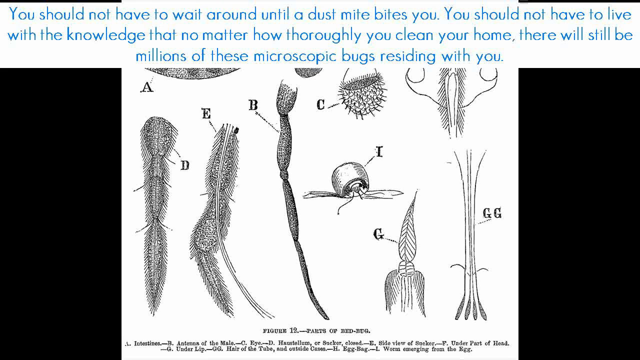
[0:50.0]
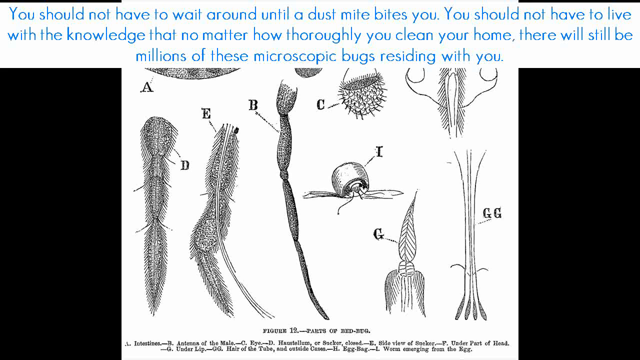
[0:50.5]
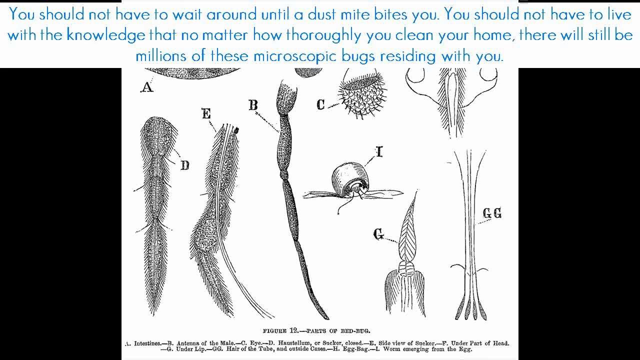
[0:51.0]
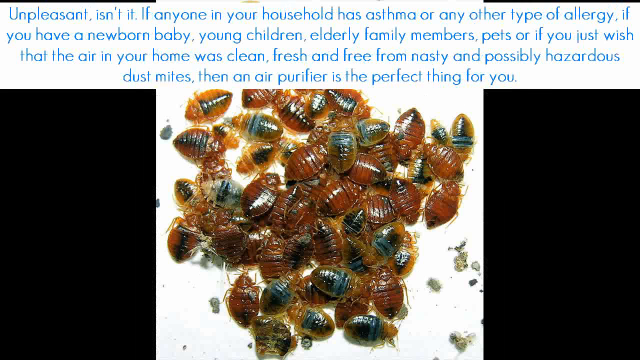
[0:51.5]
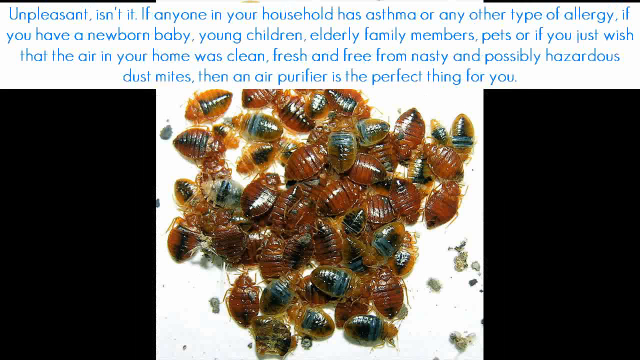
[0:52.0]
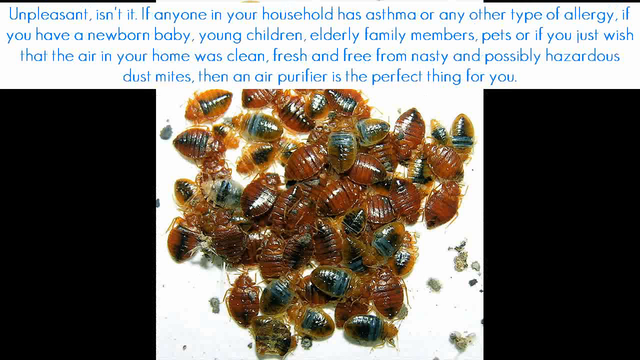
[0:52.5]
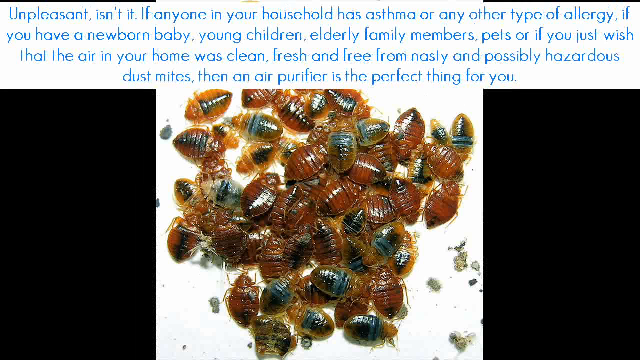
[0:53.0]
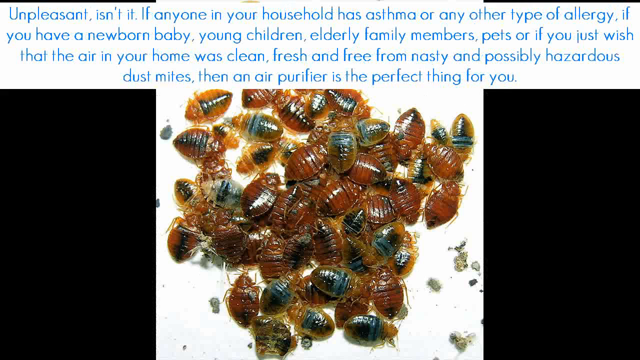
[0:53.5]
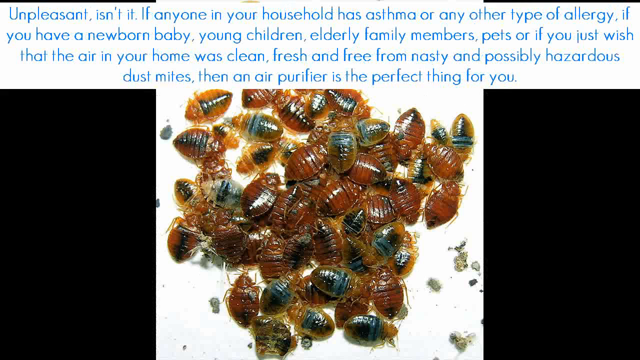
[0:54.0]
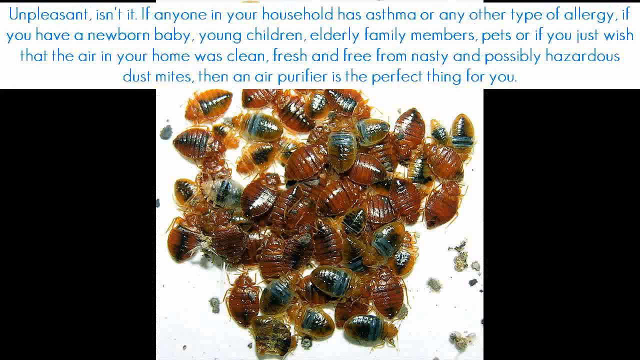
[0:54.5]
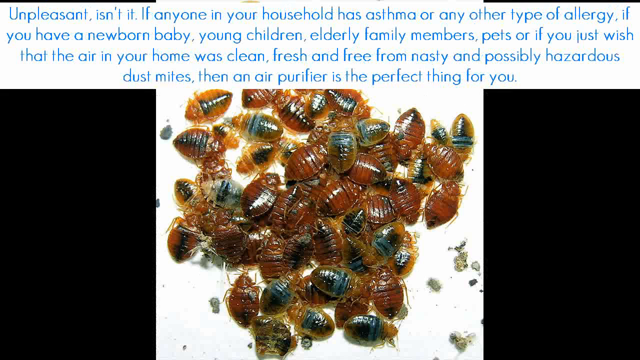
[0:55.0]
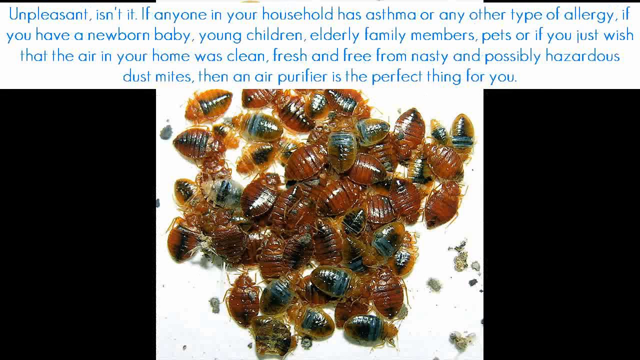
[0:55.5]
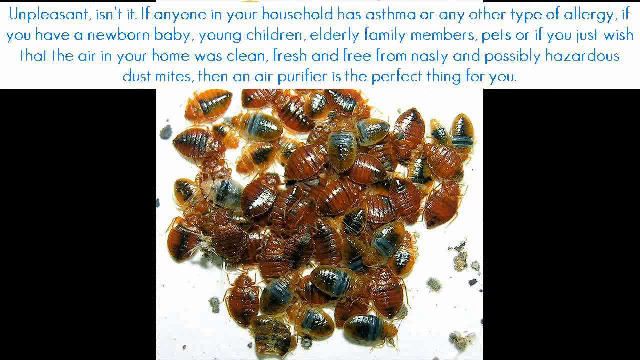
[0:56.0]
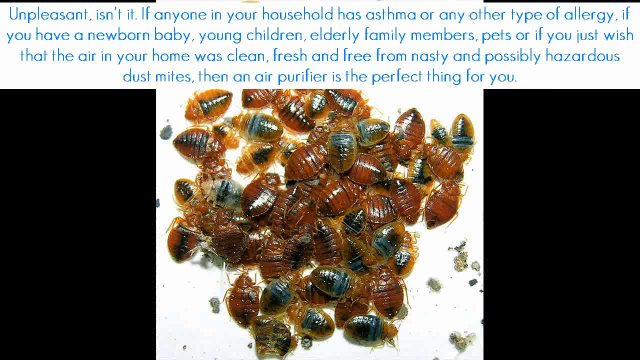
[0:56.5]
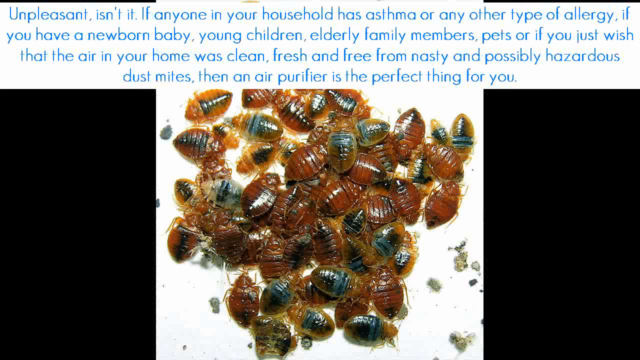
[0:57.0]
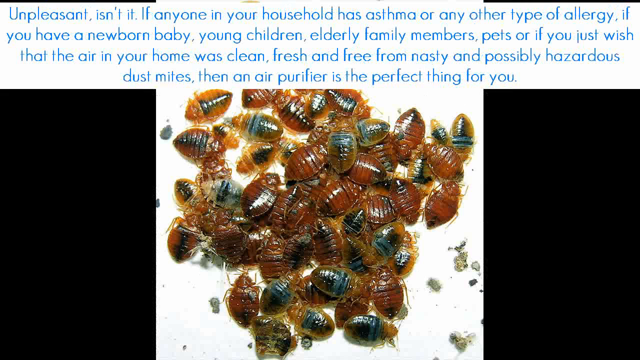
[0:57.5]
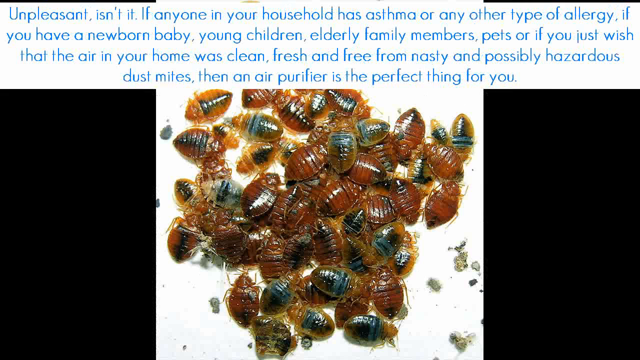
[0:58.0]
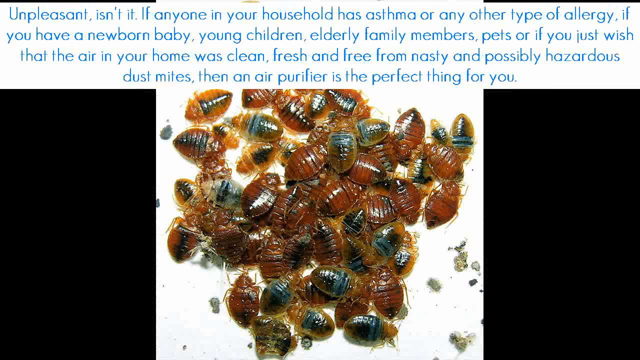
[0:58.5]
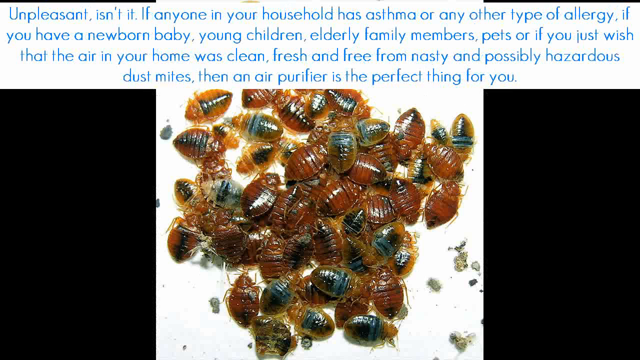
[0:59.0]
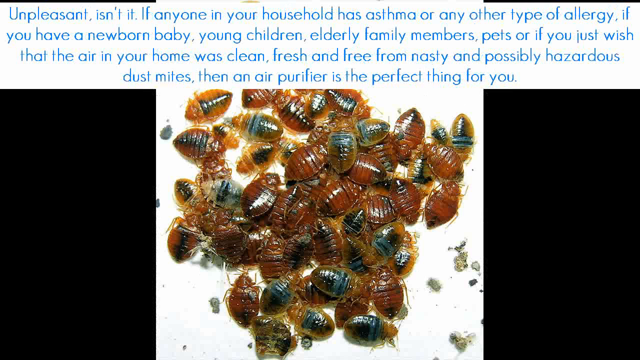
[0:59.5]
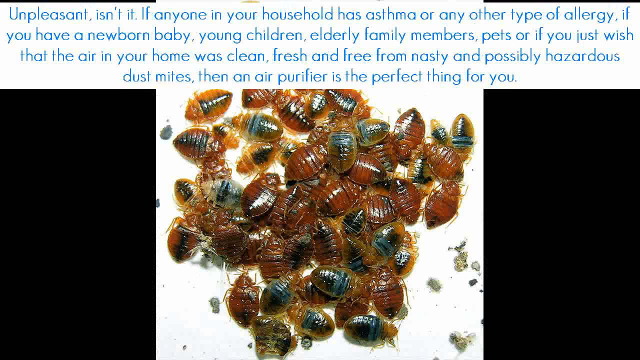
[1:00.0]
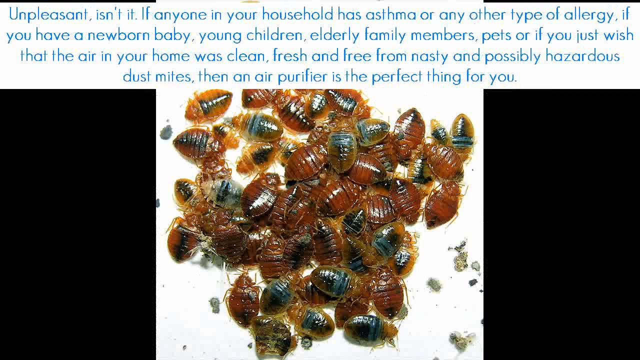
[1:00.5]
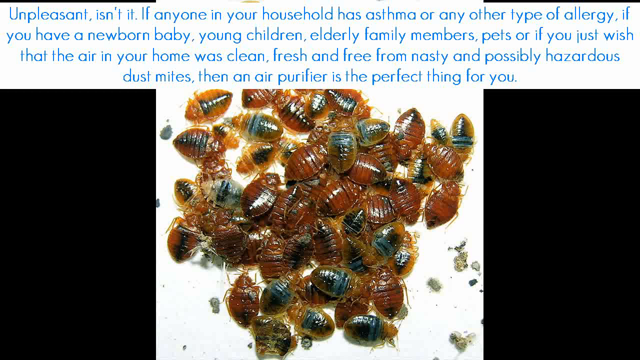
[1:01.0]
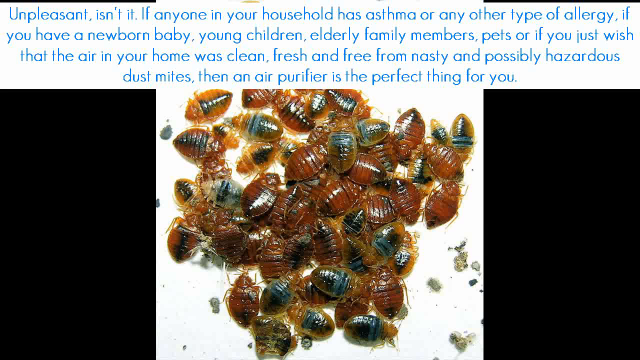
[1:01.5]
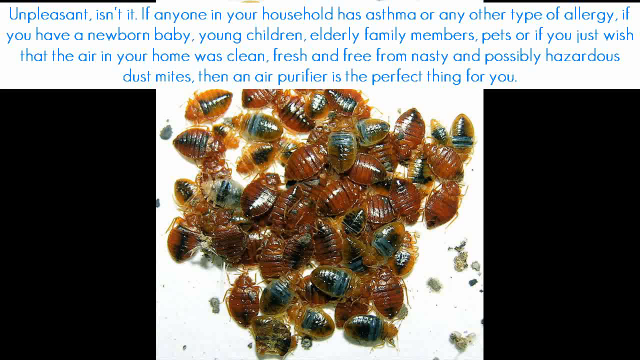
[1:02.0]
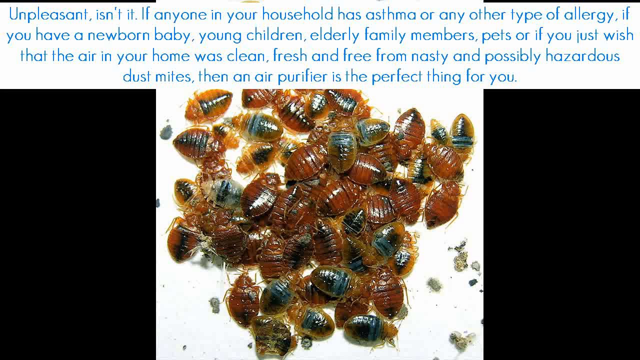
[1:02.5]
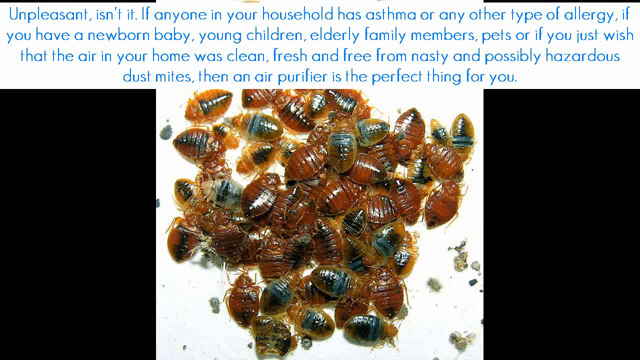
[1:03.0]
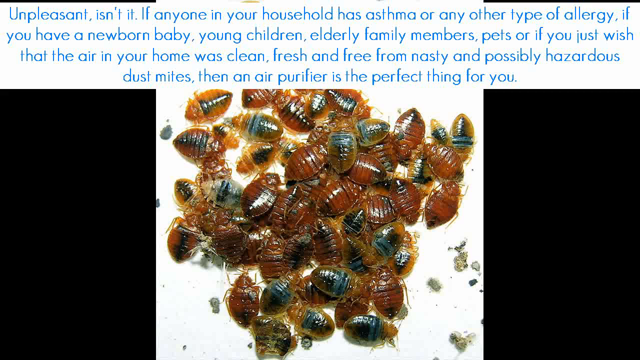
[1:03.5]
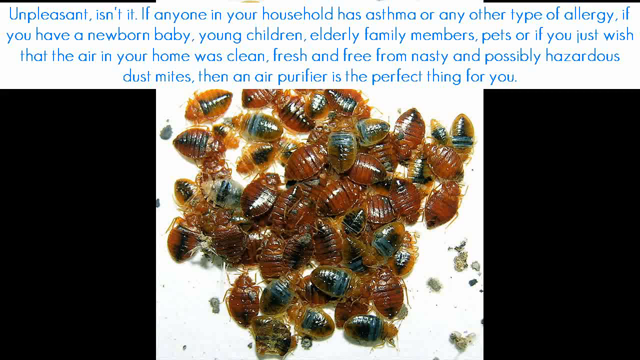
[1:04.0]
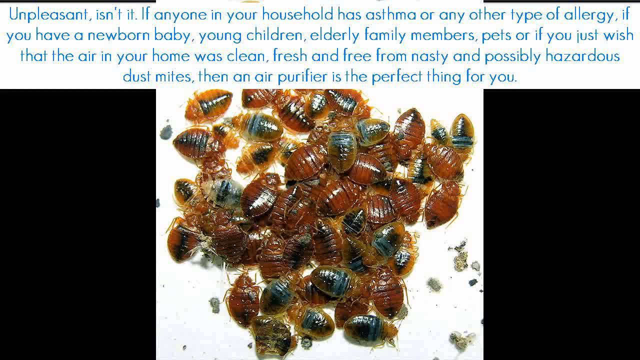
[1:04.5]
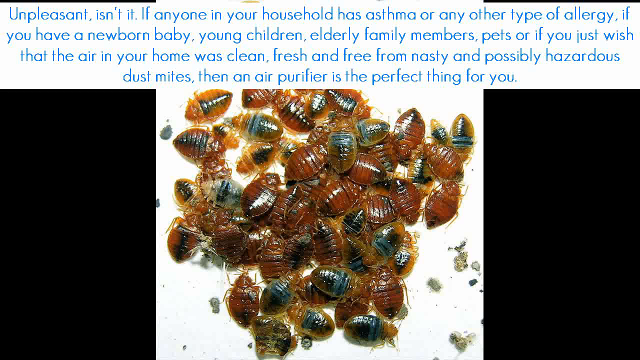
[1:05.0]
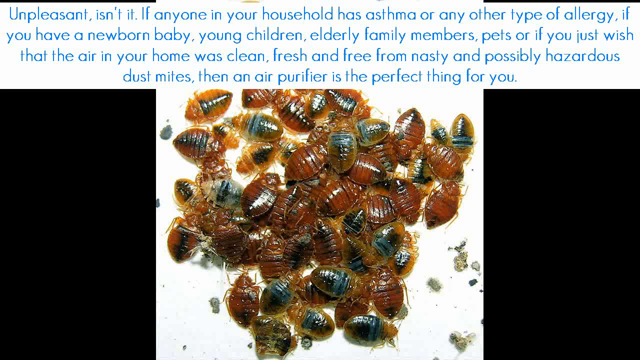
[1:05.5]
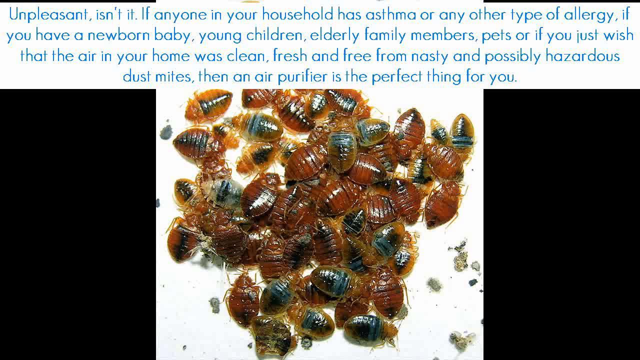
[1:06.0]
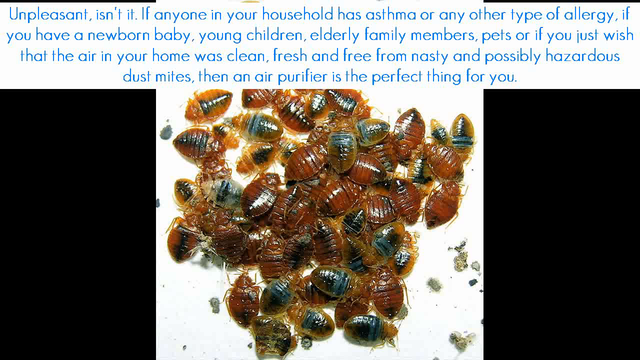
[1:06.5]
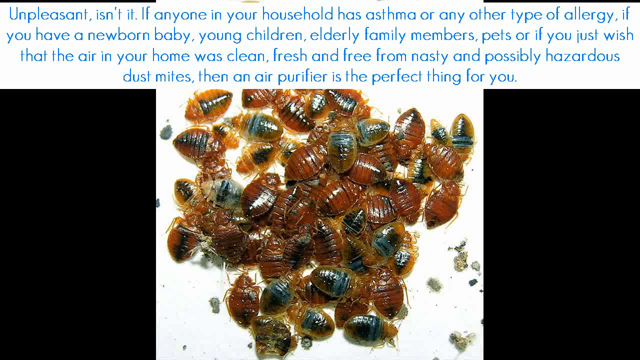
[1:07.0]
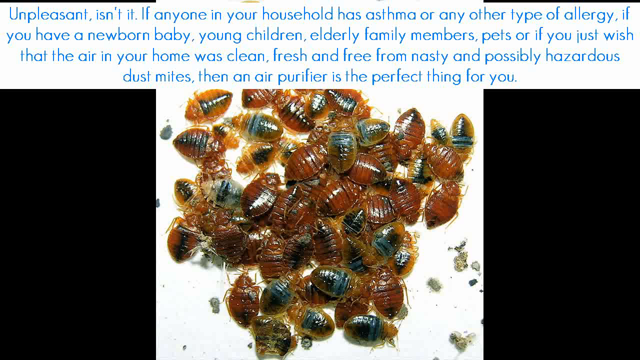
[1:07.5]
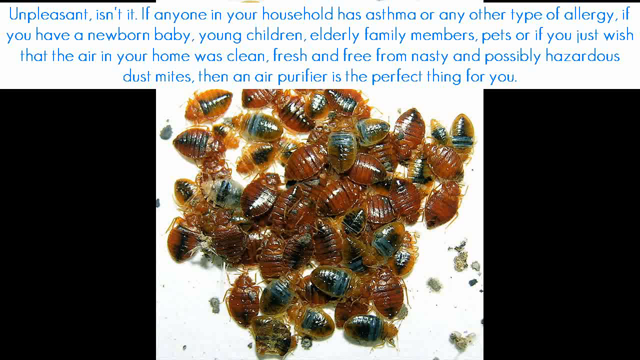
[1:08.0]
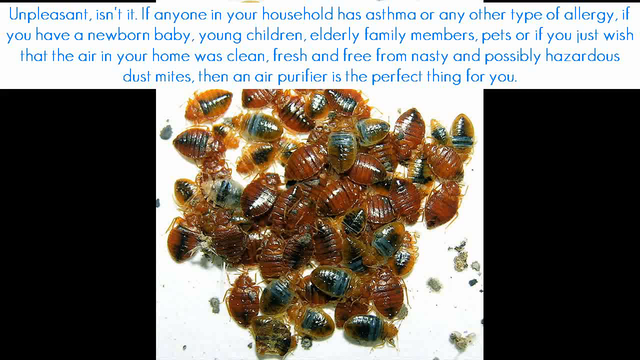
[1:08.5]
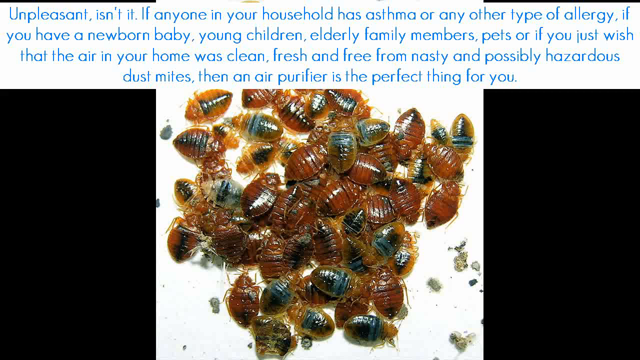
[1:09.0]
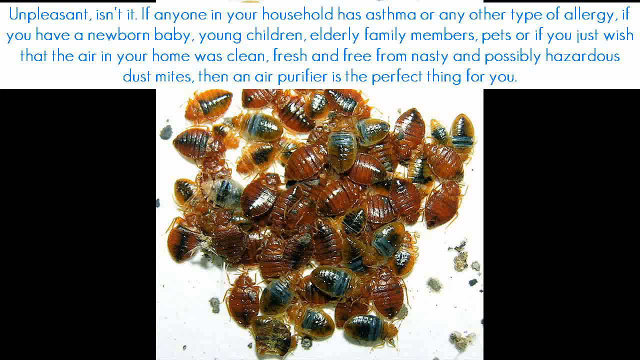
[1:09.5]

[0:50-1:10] The parts of a dust mite are shown, and text says you should not have to wait around until a dust mite bites you or live with the knowledge that millions of these microscopic bugs are residing with you. The video then names groups who are more sensitive to dust mites: people with asthma, young people, old people and infants. It then promotes an air purifier, without saying what the air purifier does or who is selling it.